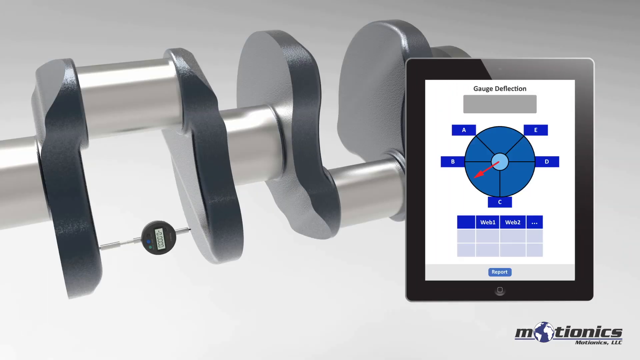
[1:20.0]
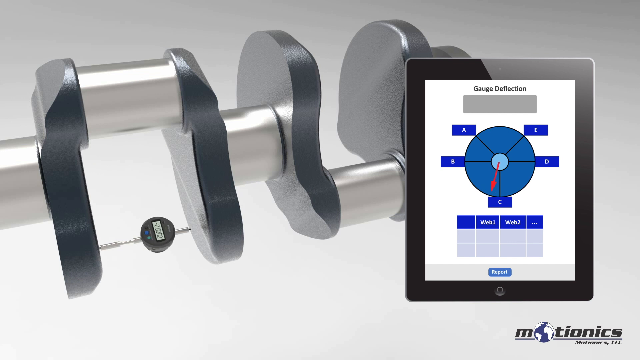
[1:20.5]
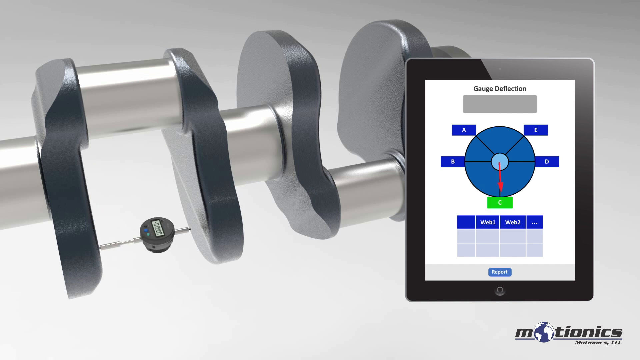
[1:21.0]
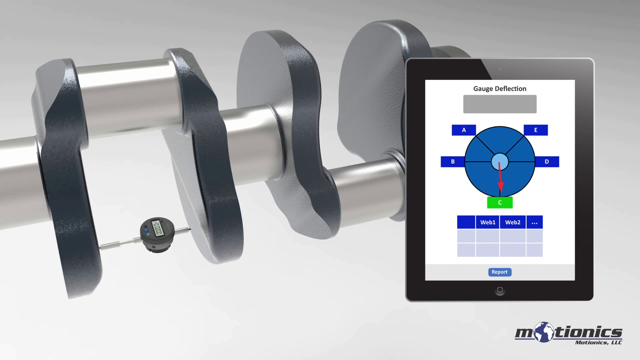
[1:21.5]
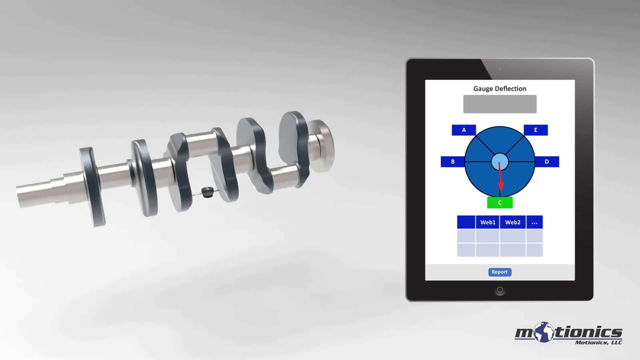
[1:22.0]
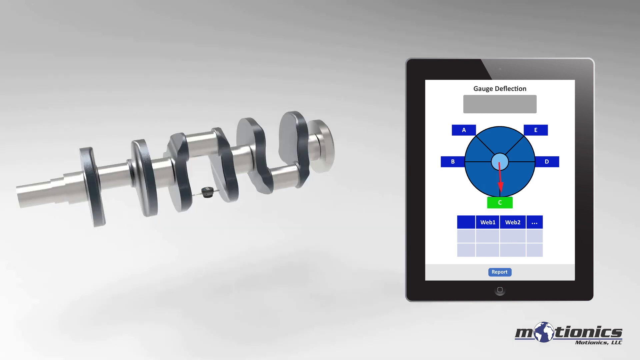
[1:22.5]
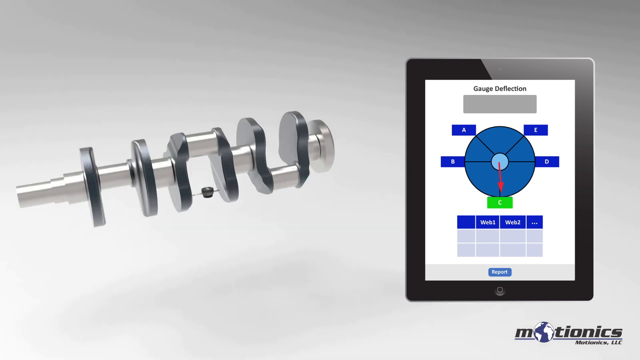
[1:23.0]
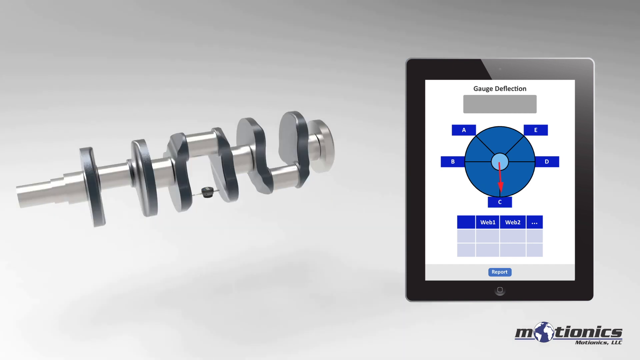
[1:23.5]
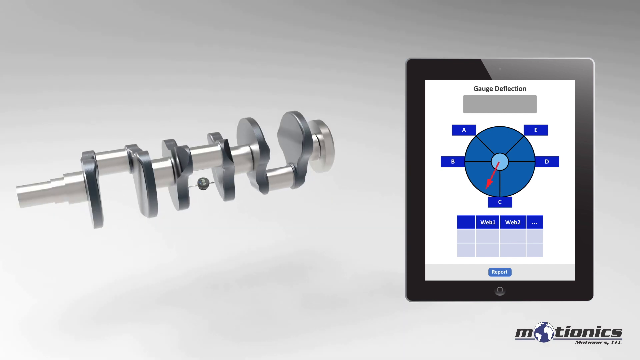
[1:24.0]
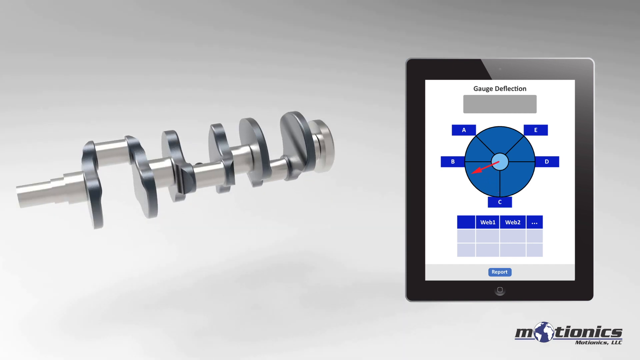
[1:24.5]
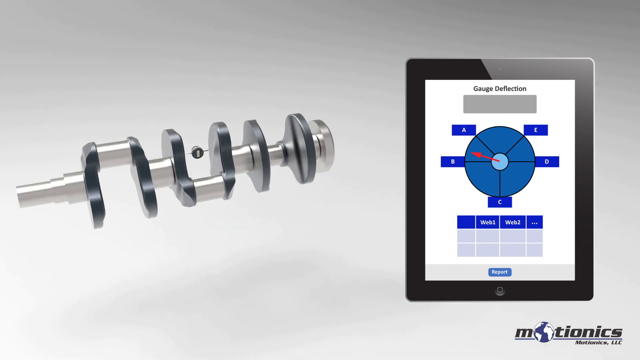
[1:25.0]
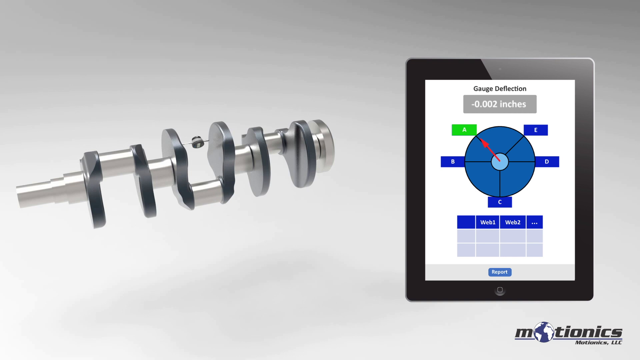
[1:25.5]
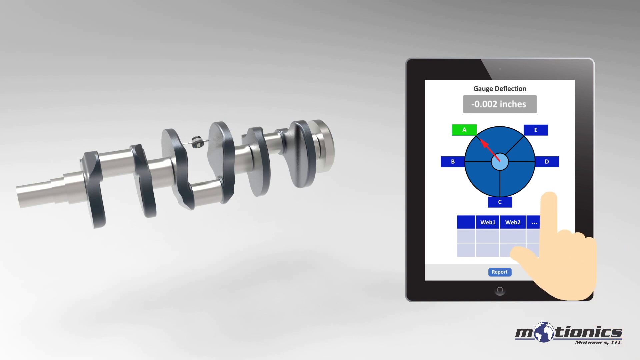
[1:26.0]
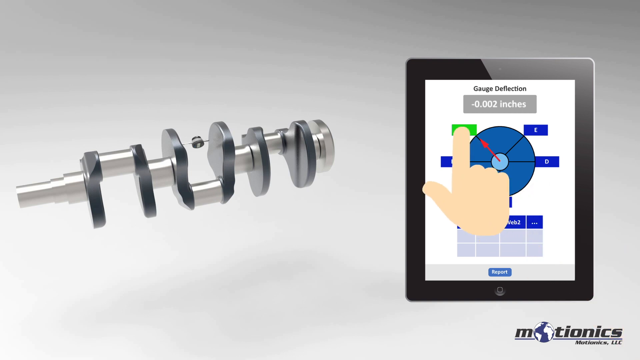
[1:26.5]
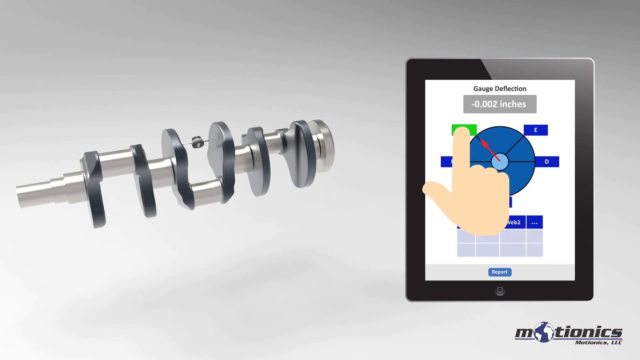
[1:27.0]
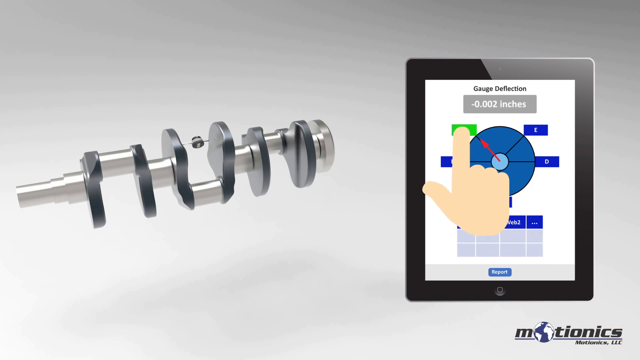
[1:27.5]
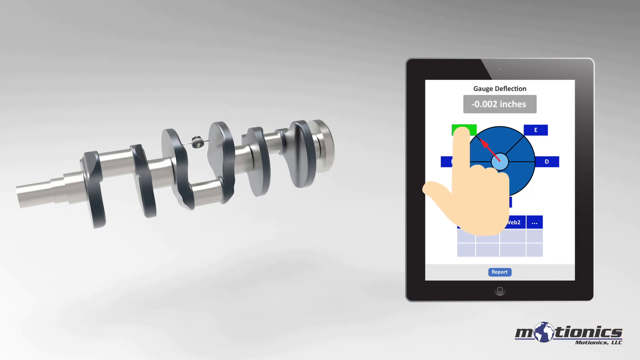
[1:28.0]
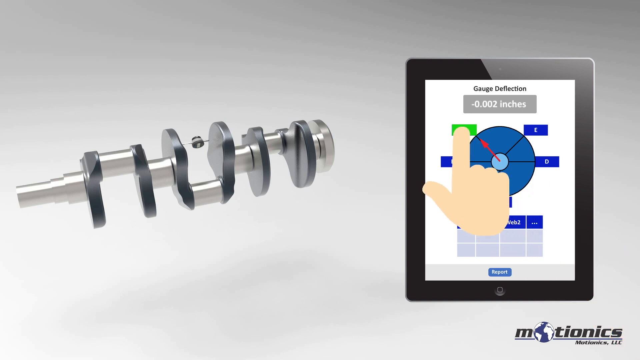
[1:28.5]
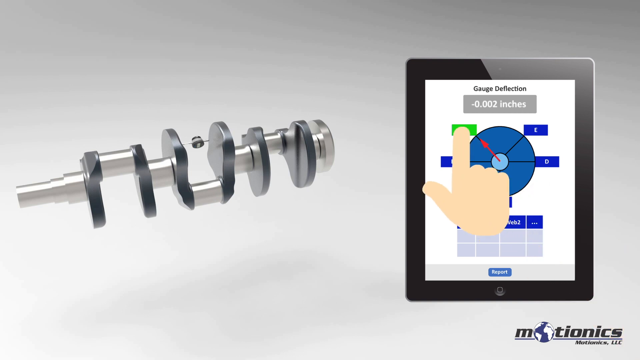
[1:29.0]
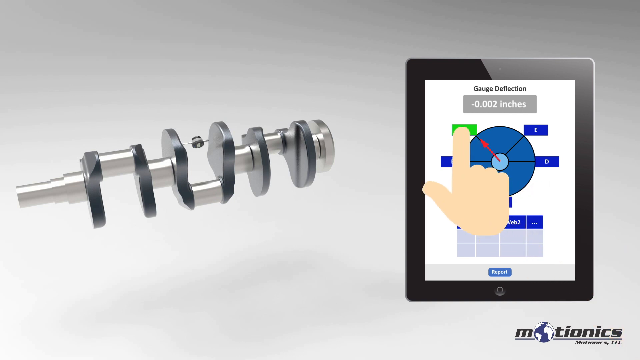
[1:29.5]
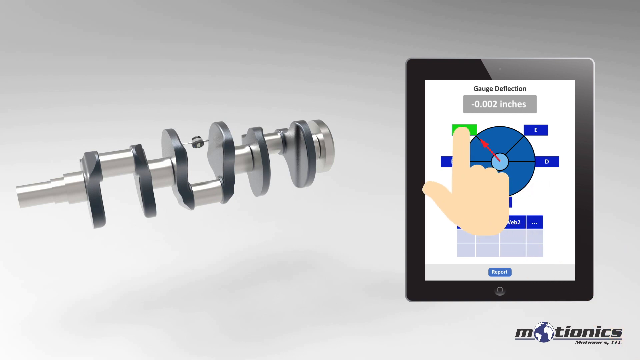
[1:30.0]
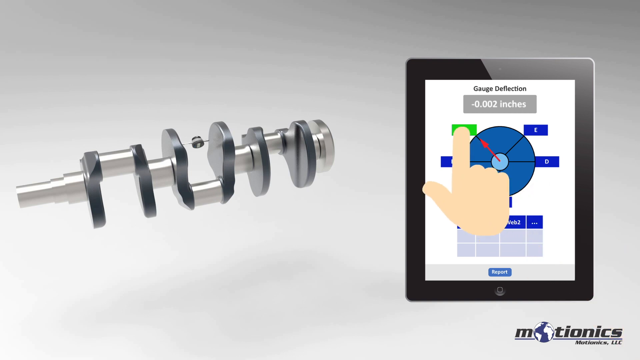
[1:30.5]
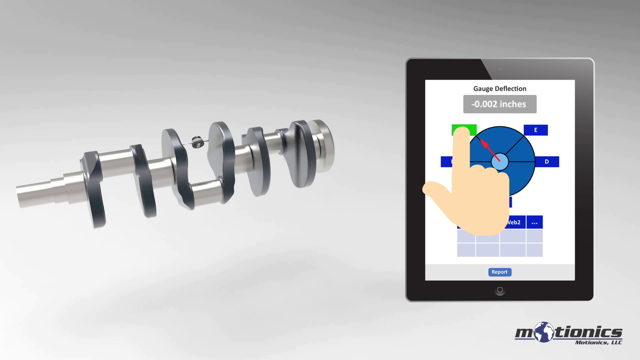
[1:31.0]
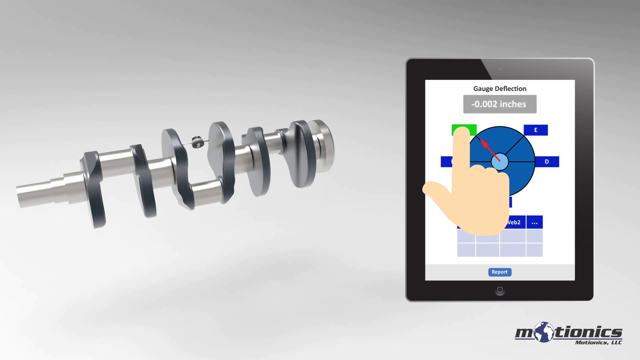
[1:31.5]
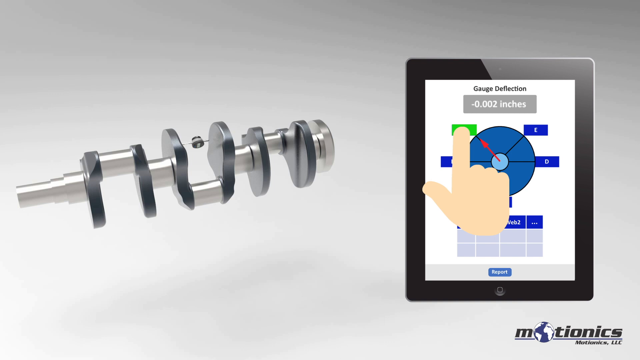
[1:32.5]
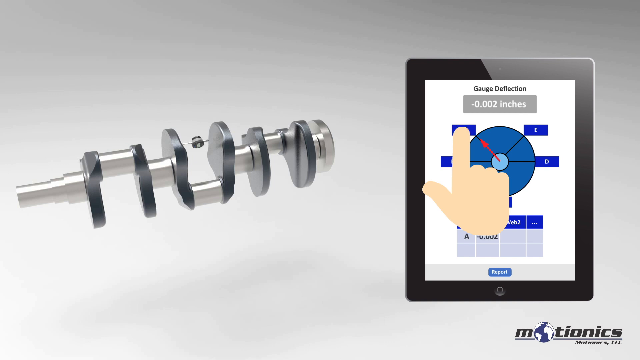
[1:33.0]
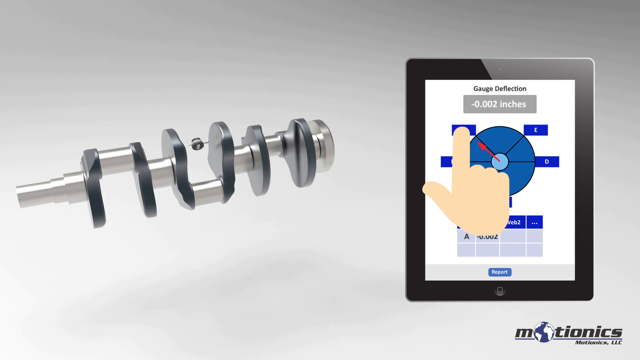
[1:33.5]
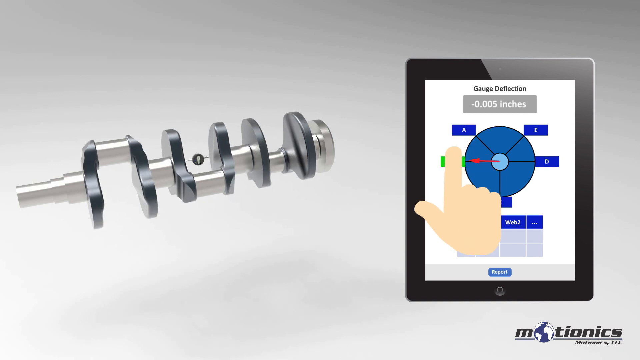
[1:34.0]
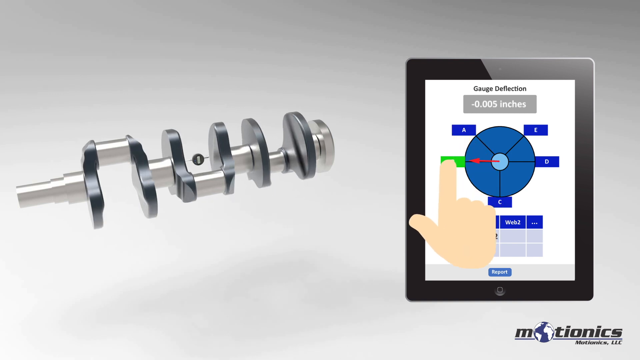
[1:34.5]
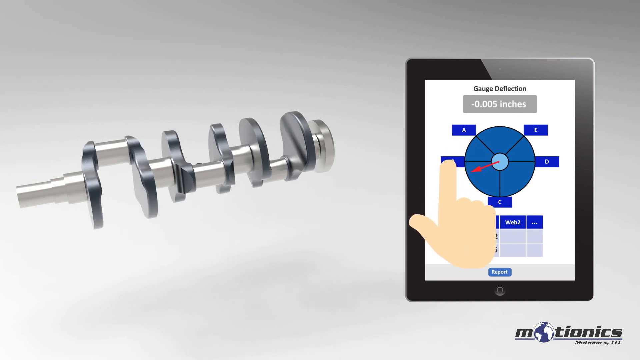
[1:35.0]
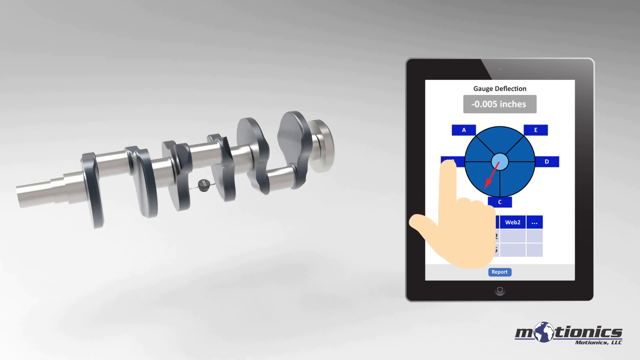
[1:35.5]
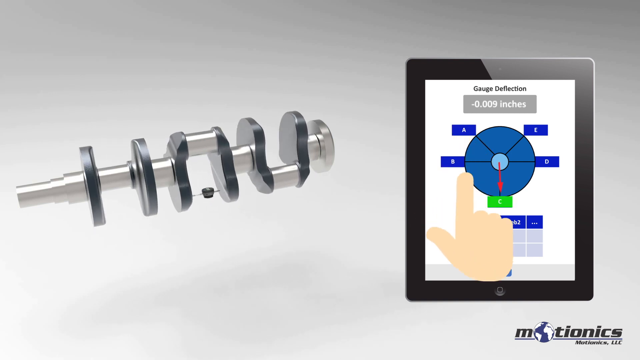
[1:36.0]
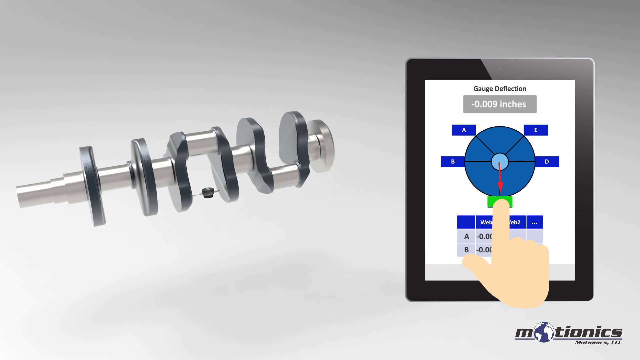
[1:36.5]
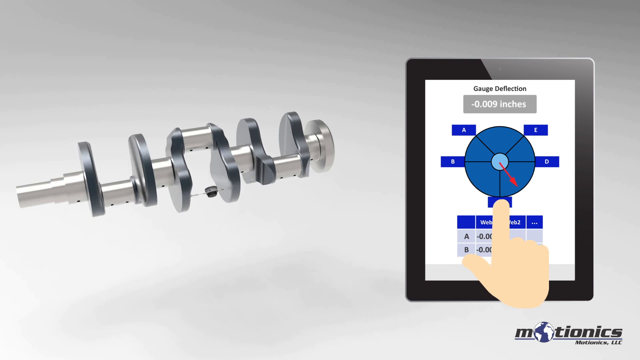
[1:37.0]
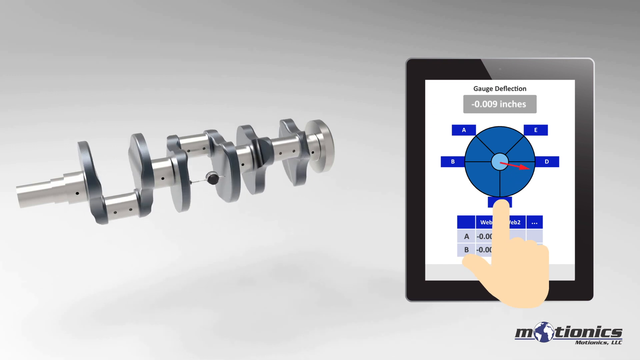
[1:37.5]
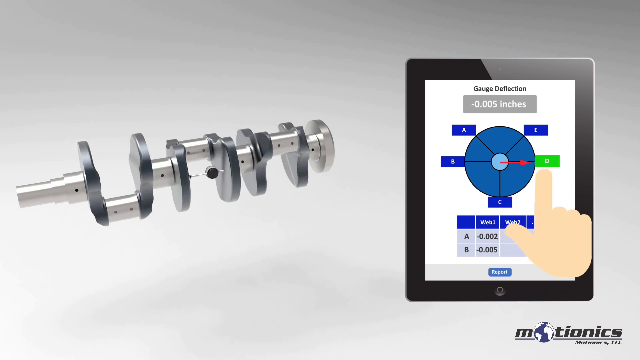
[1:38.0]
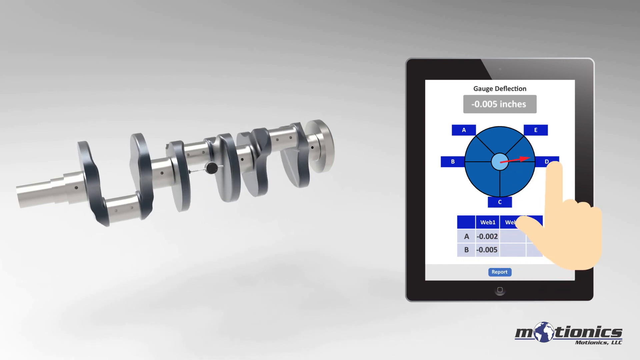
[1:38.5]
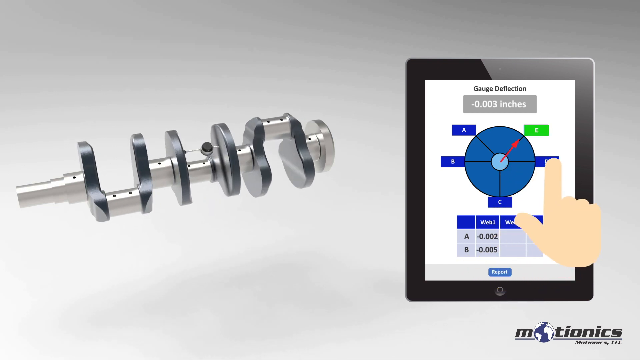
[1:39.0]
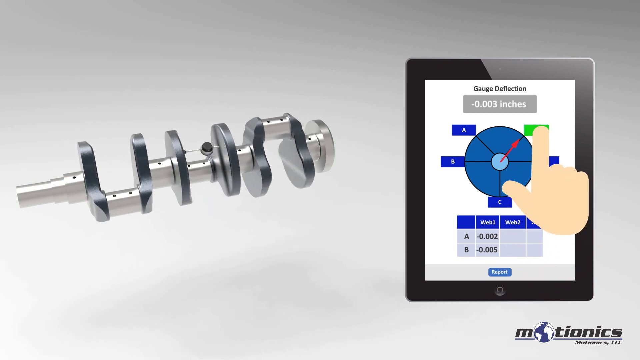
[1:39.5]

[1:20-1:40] The arrow on the tablet moves from the left to the bottom of the circle, pointing downward at the six o'clock position, and the letter C is highlighted in green. The arrow then moves back to the left, passing B, which briefly highlights green, and moves up to A, highlighting it. Meanwhile, on the left of the screen, an animation of the cylinder turning is shown. The cartoon hand slides in from the right with its thumb out to the left and index finger pointing, and puts its finger over the letter A, which is highlighted in green. A then turns blue and the cylinder begins to spin. The hand slides down slightly to the left over B, highlighted in green, where the red arrow now points. The arrow moves down to C and the finger slides to it, then the arrow moves to D on the right and the finger points to it, then the arrow moves to E and the finger points to it. Each time, the finger and arrow move counterclockwise and the cylinder spins upward.